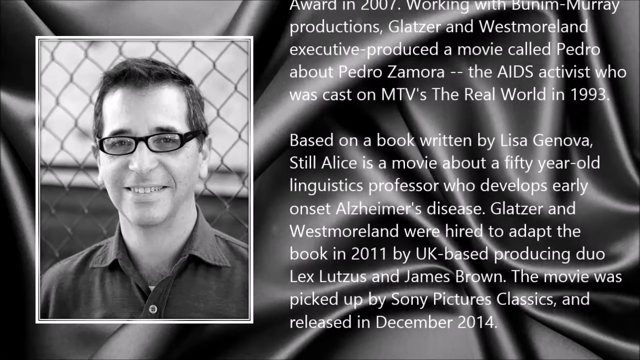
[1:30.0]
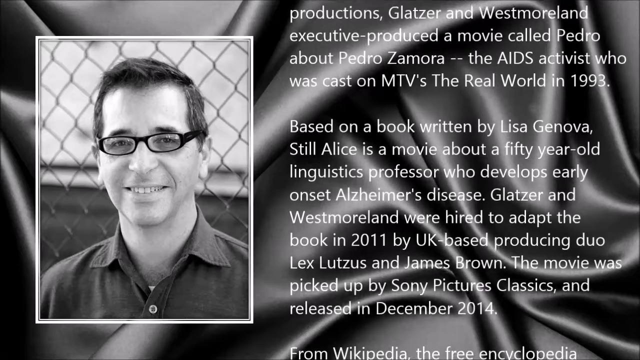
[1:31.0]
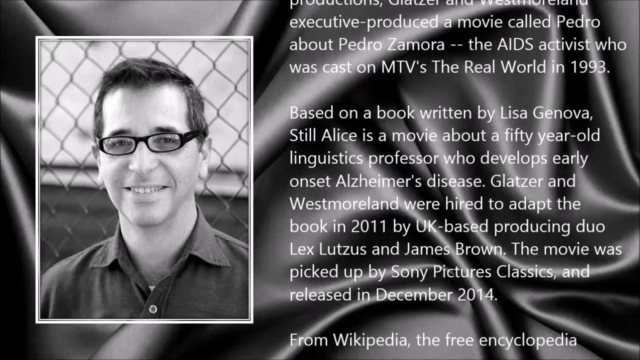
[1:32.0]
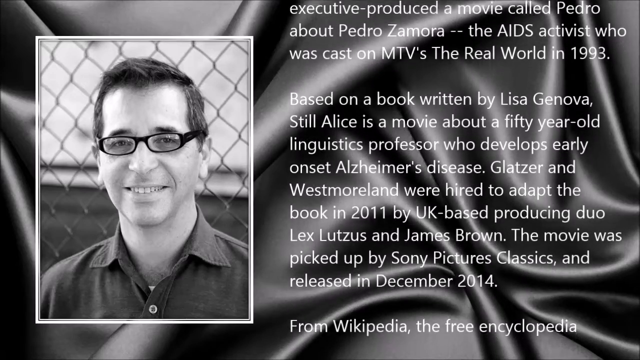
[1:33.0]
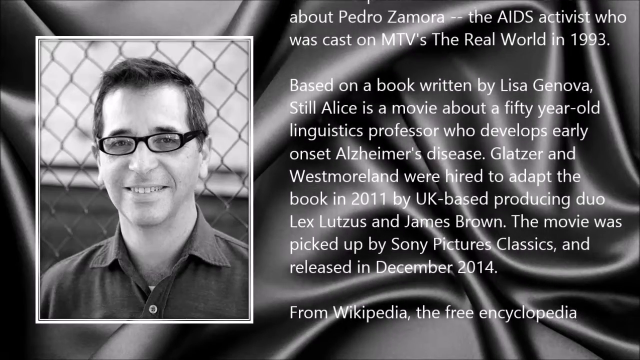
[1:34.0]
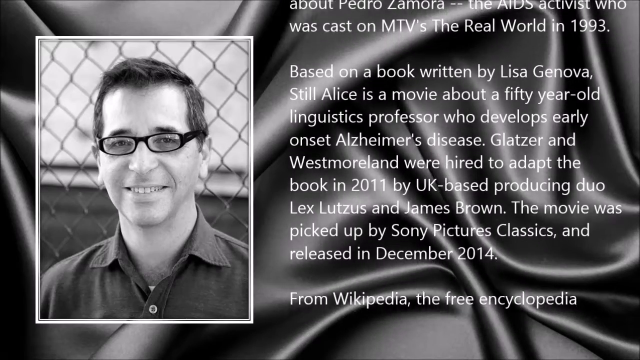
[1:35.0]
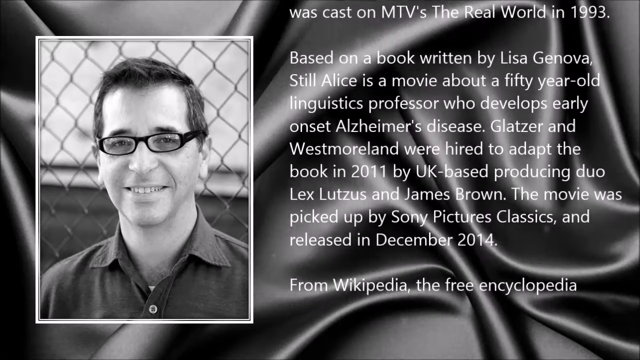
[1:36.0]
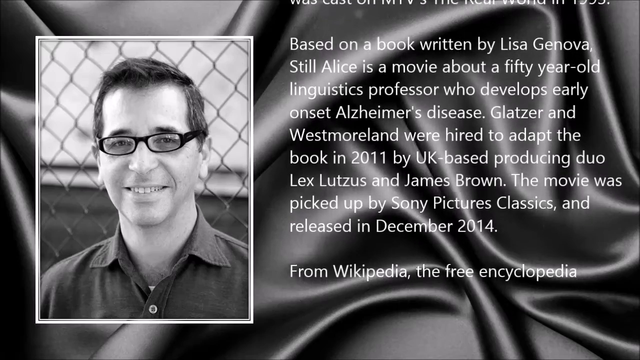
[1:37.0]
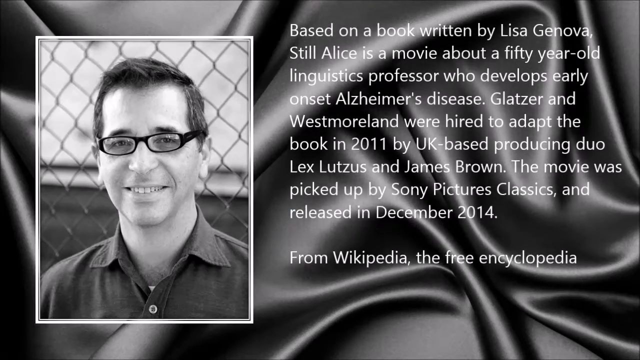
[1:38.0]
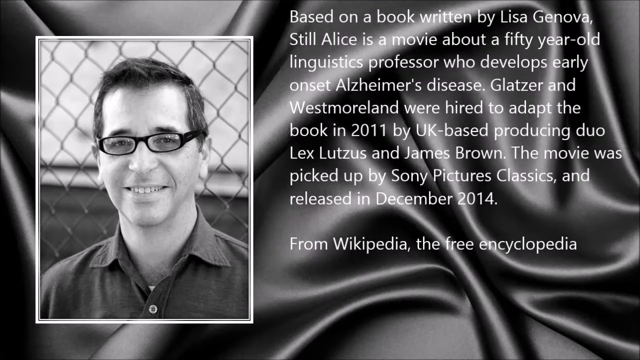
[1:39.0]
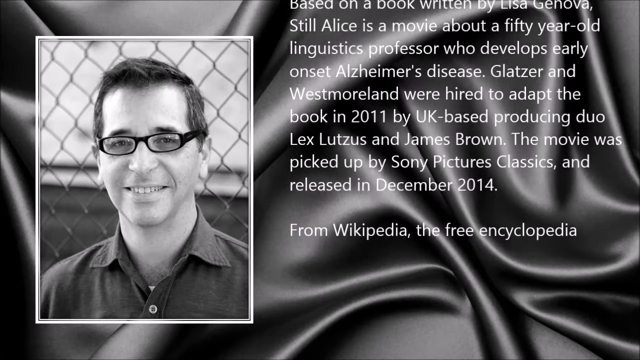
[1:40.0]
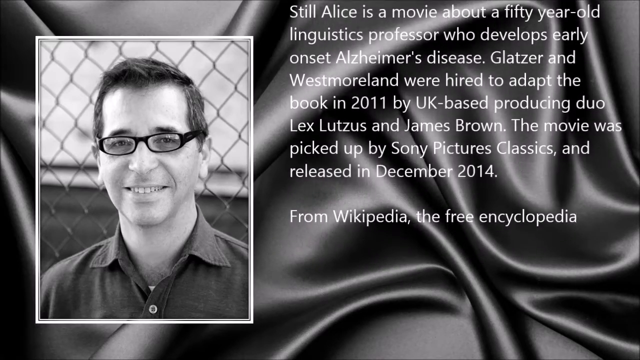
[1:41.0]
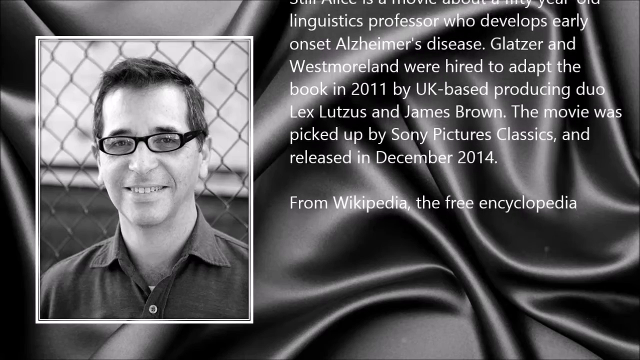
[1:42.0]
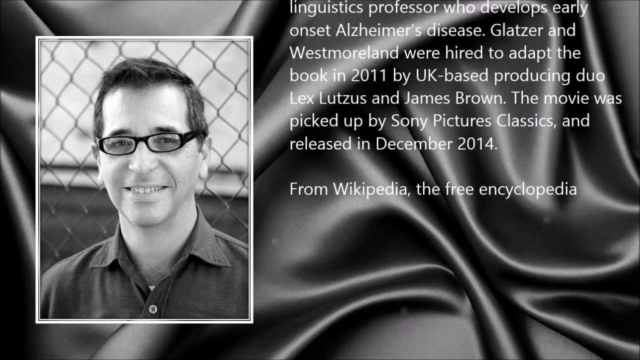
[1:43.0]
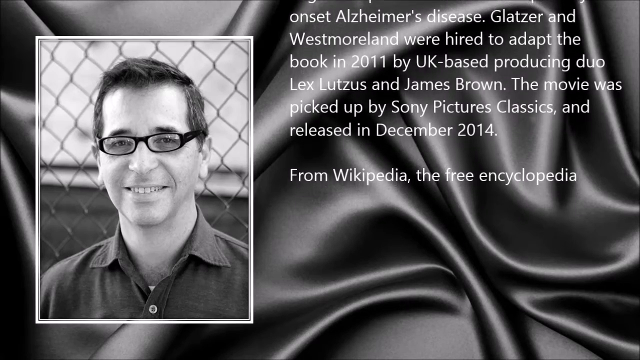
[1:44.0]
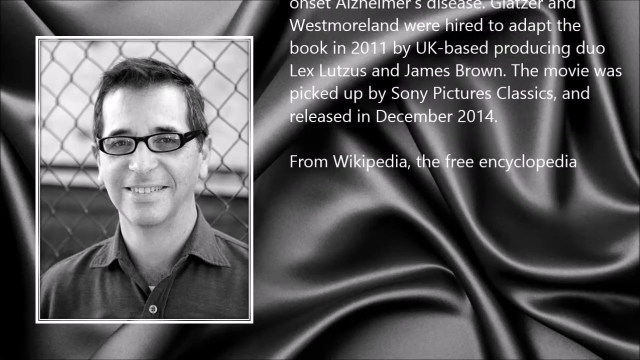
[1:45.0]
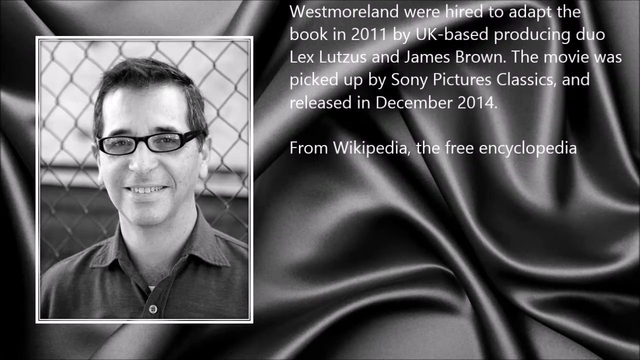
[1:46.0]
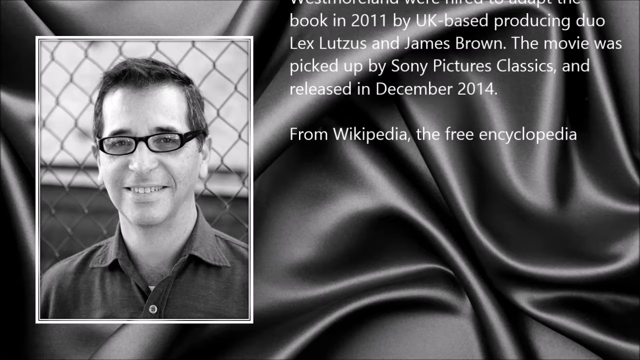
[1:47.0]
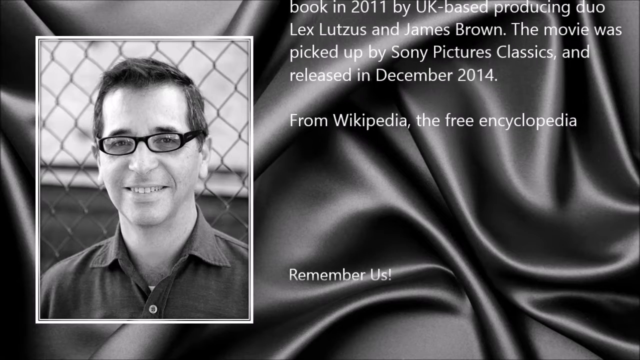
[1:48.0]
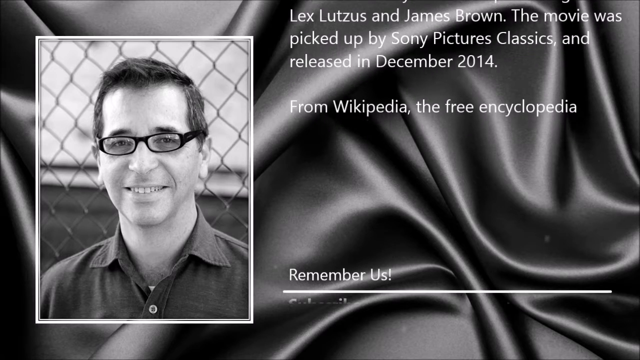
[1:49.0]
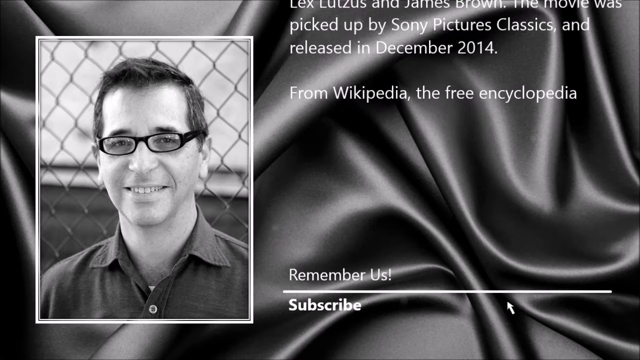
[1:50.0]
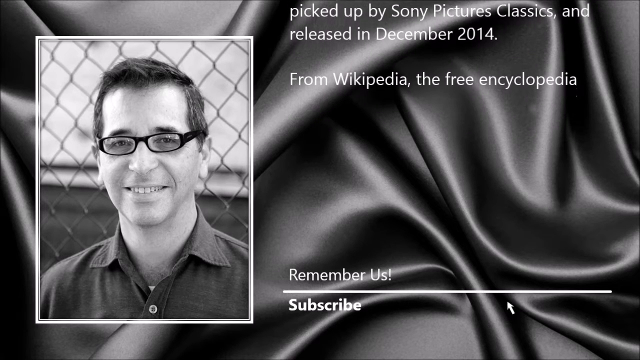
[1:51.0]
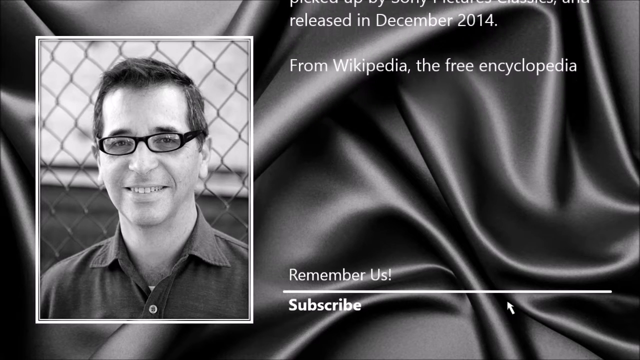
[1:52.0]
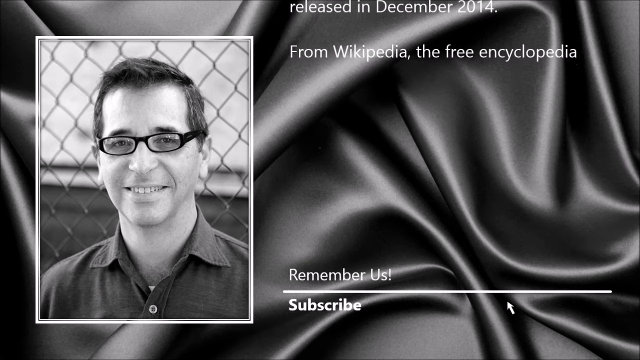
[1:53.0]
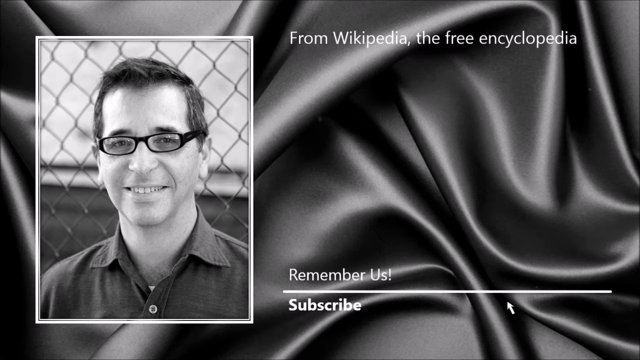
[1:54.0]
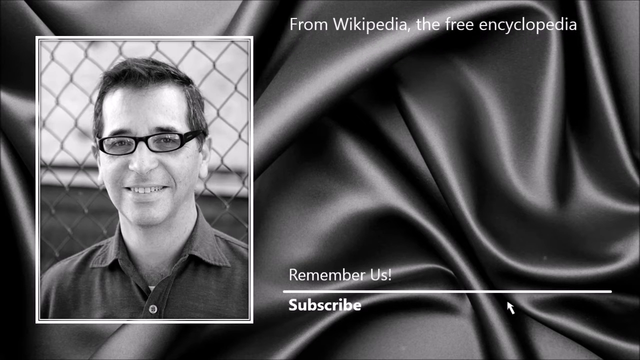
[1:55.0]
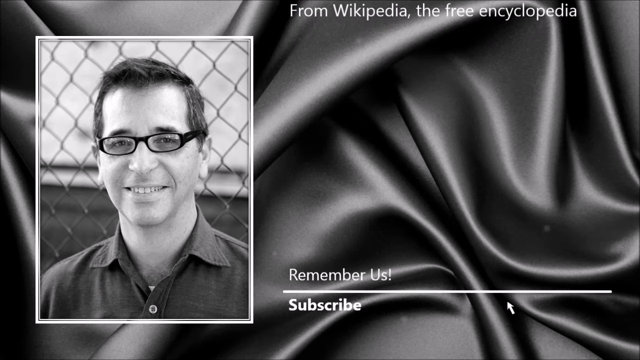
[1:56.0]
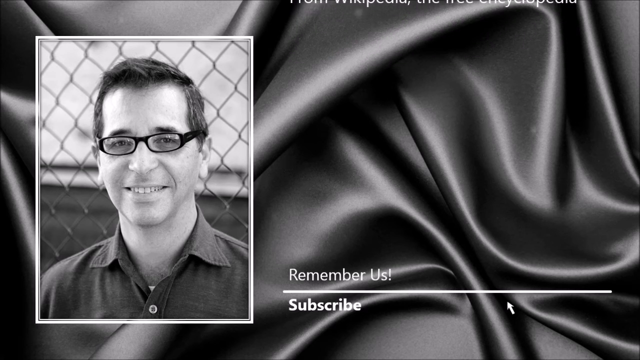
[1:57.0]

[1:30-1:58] The memorial video for Richard Glatzer continues with a picture of Richard on the left side of the screen. He is a white male in his 50s with a short haircut, black rectangular plastic-rimmed glasses and a nice smile. He wears a colored collared shirt and stands in front of a chain-link fence. To the left, text about his career appears: "Based on a book written by Lisa Genova, Still Alice is a movie about a 50-year-old linguistics professor who develops early onset Alzheimer's disease. Glatzer and Westmoreland were hired to adapt the book in 2011 by UK-based producing duo Lex Luxus and James Brown. The movie was picked up by Sony Pictures Classics and released in December 2014. From Wikipedia, the free encyclopedia." Finally, the screen reads "remember us" and then "subscribe."